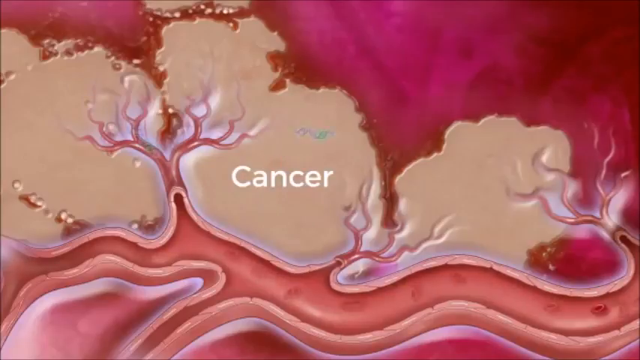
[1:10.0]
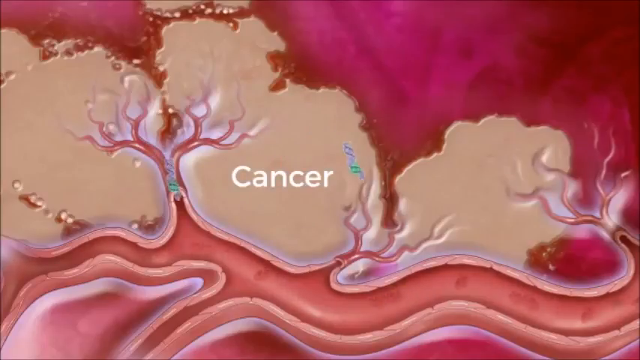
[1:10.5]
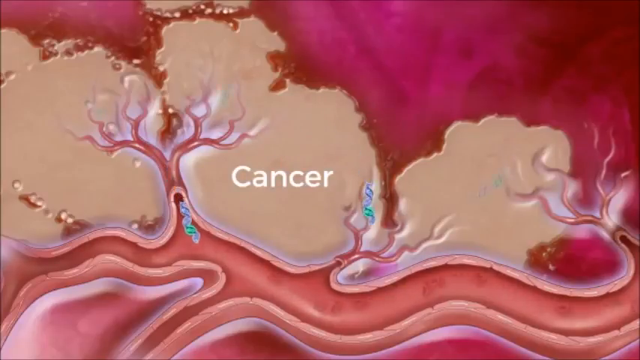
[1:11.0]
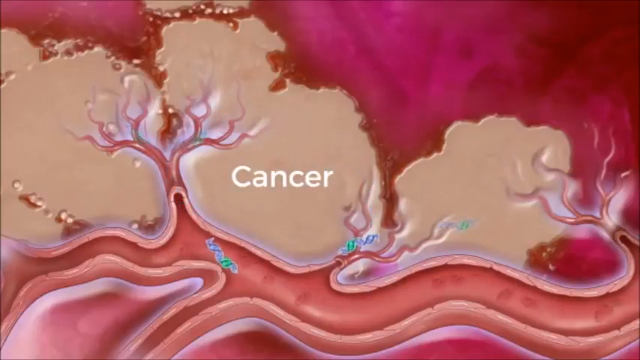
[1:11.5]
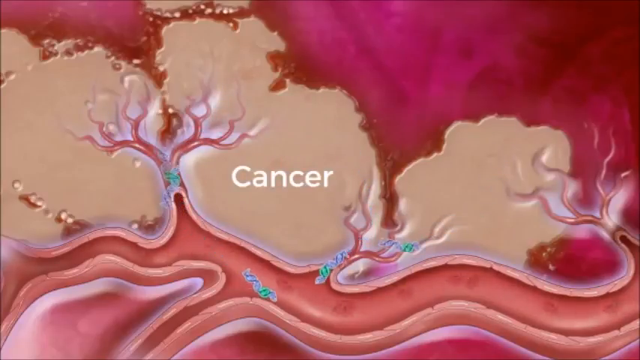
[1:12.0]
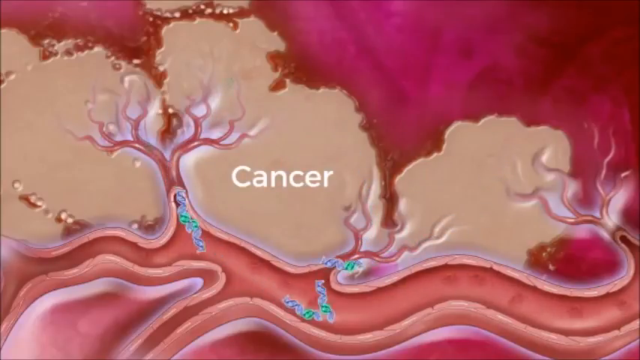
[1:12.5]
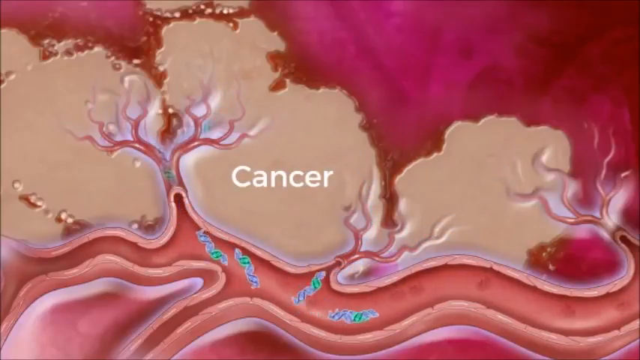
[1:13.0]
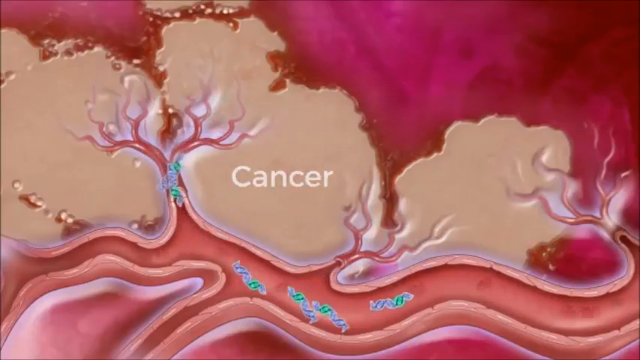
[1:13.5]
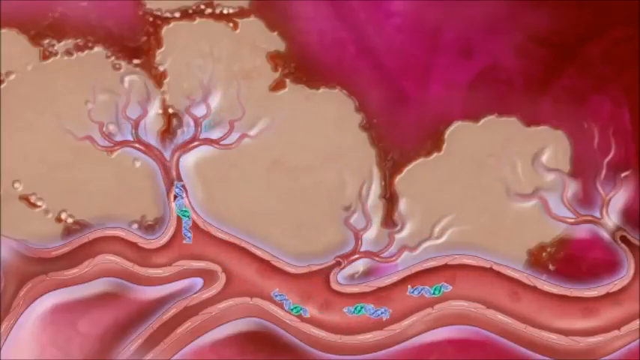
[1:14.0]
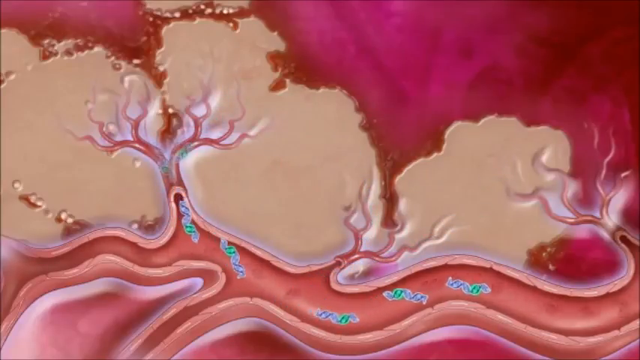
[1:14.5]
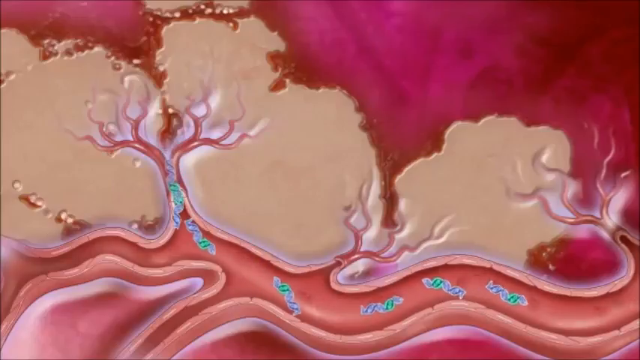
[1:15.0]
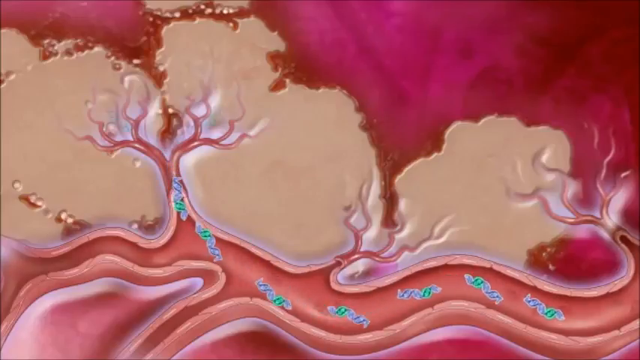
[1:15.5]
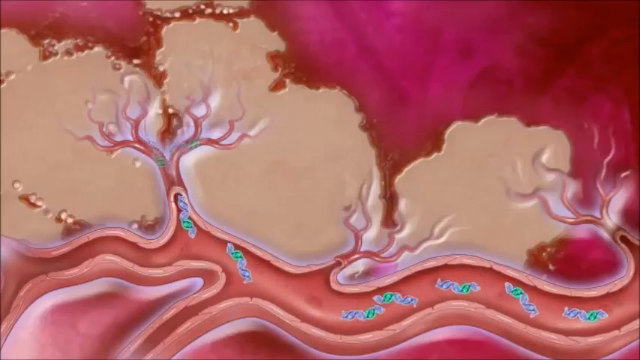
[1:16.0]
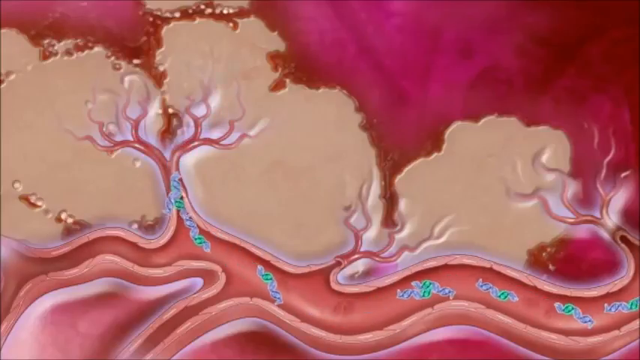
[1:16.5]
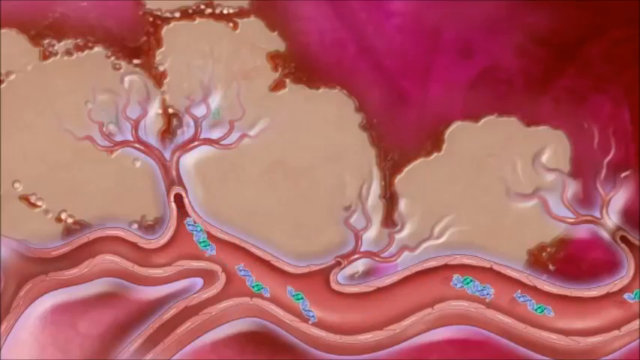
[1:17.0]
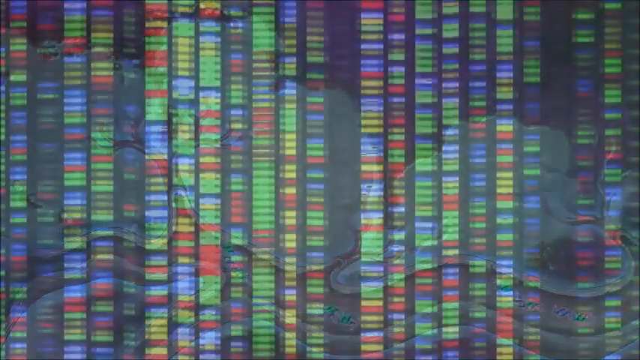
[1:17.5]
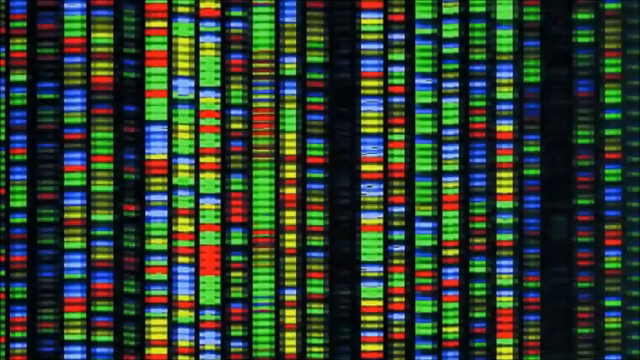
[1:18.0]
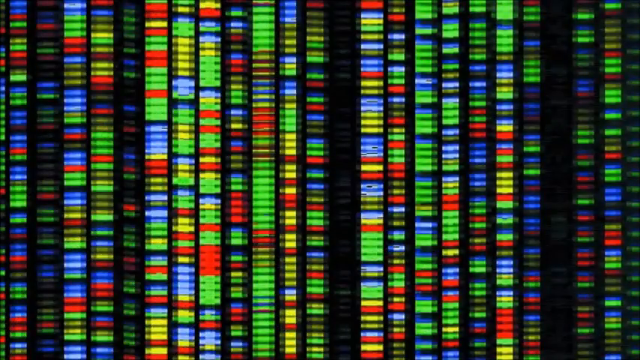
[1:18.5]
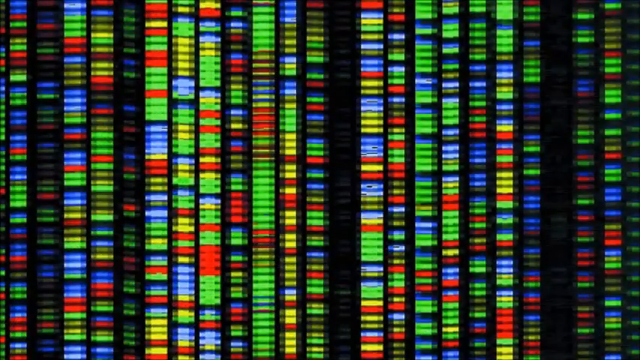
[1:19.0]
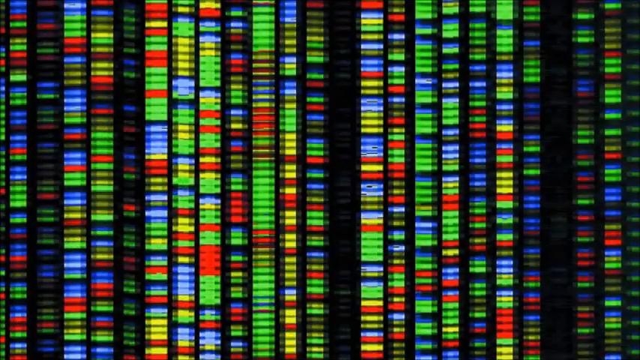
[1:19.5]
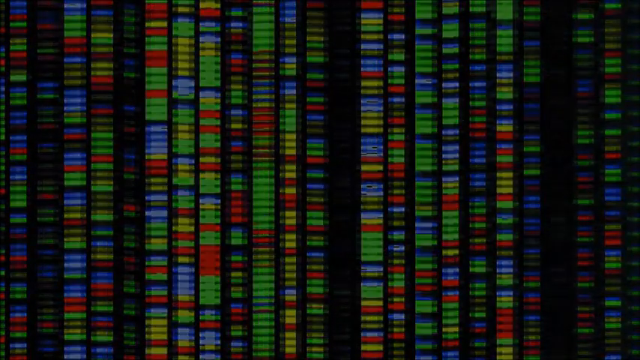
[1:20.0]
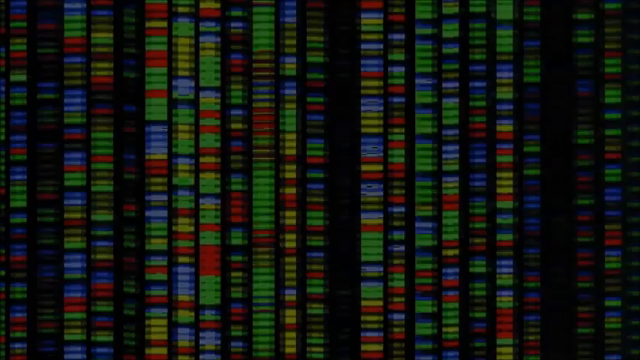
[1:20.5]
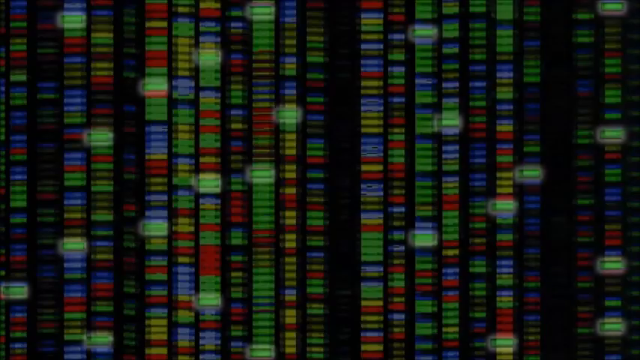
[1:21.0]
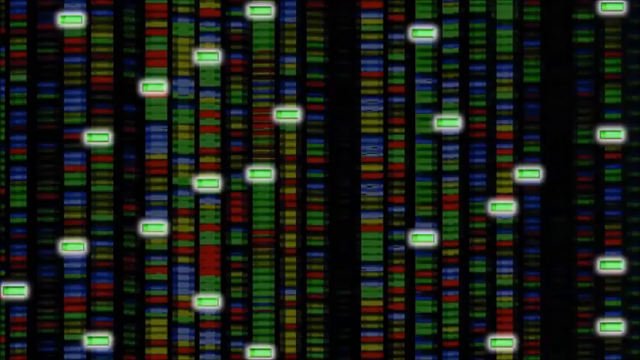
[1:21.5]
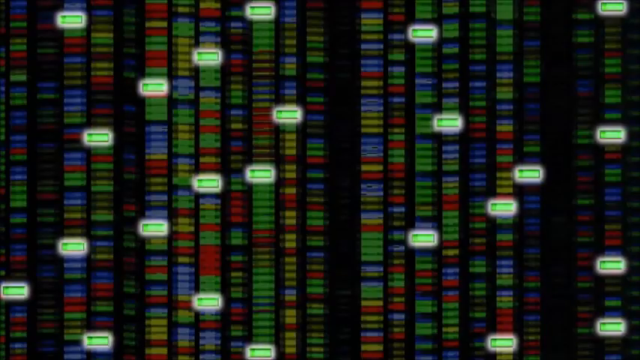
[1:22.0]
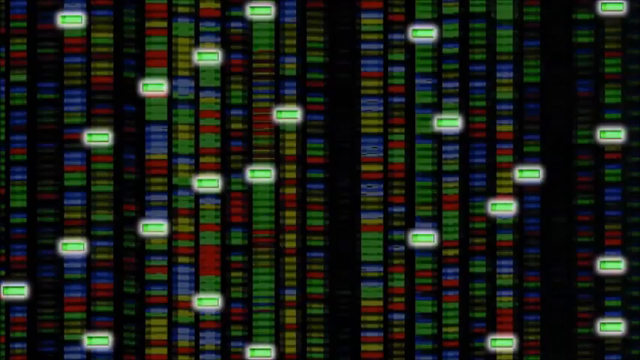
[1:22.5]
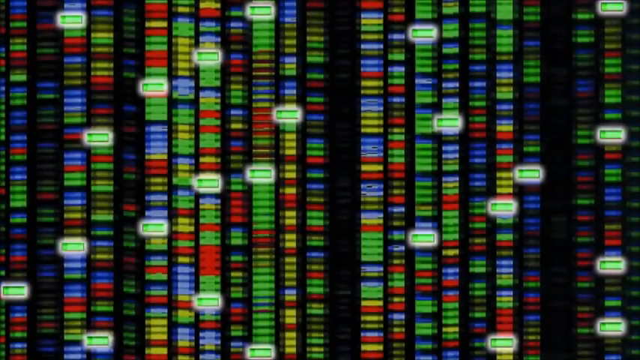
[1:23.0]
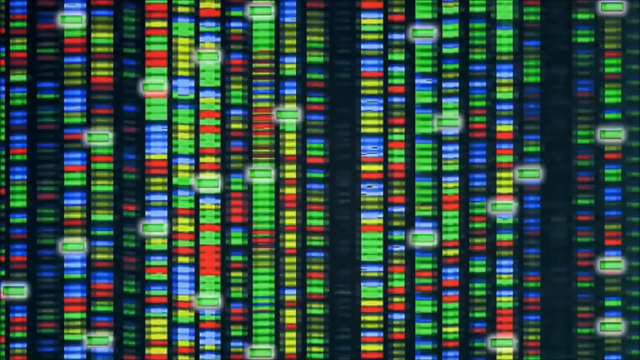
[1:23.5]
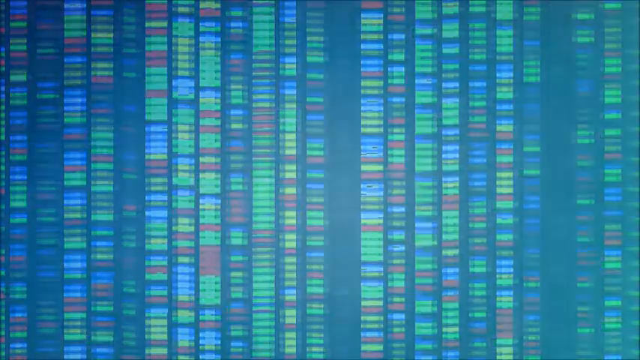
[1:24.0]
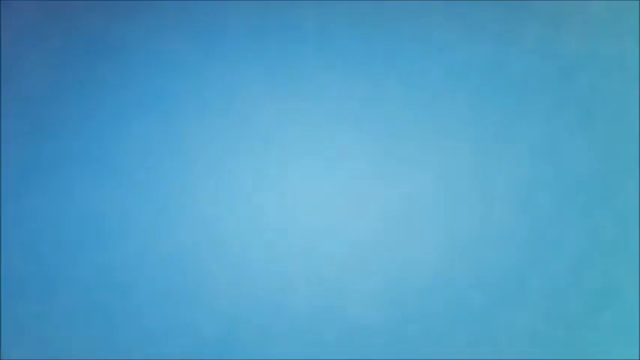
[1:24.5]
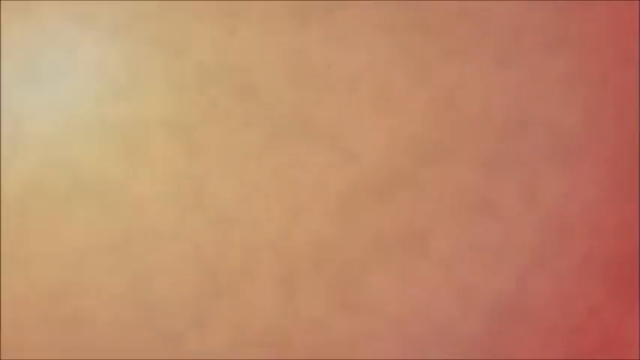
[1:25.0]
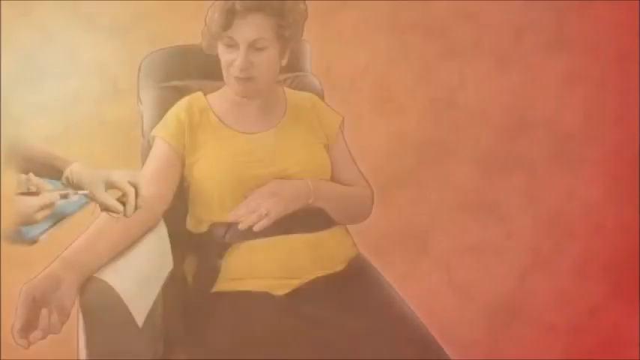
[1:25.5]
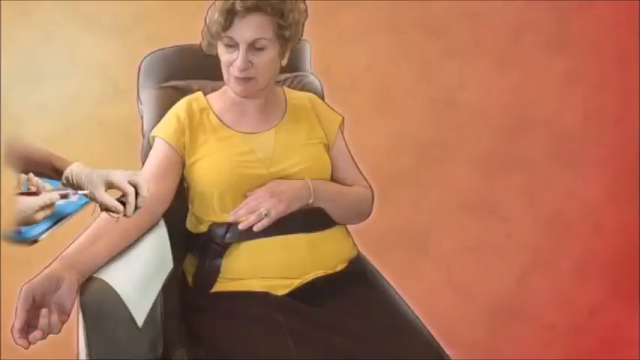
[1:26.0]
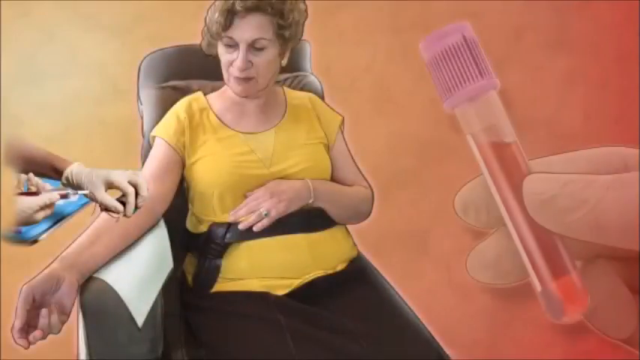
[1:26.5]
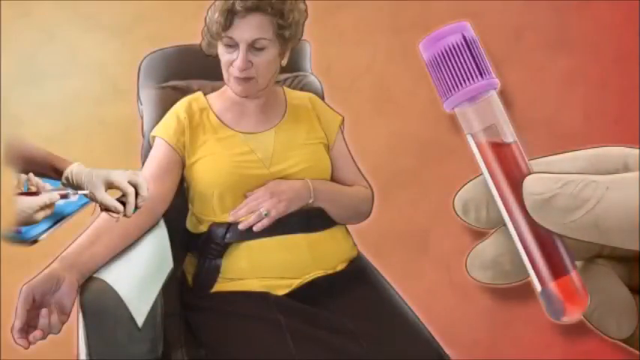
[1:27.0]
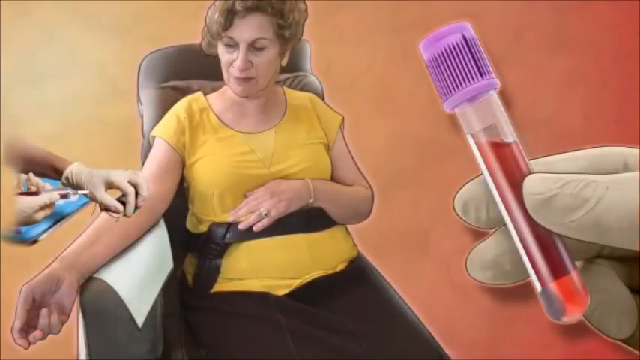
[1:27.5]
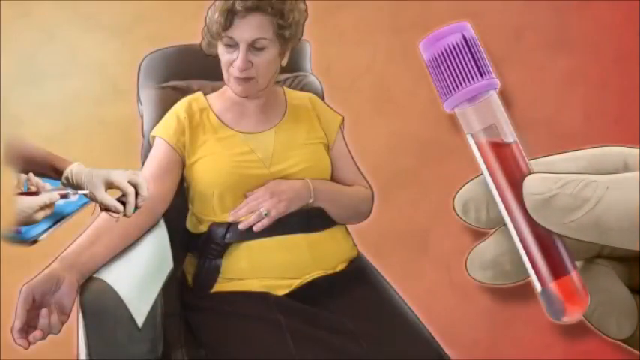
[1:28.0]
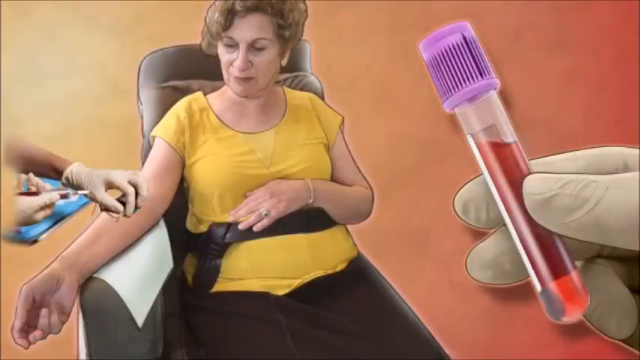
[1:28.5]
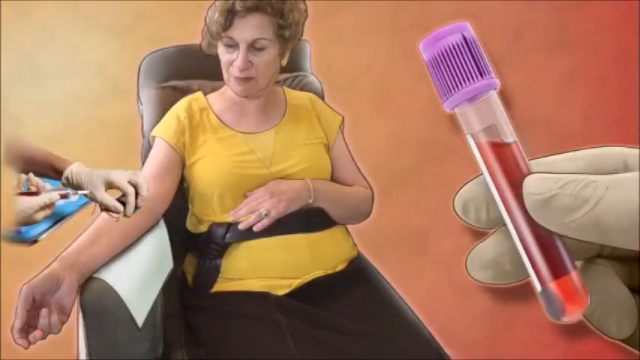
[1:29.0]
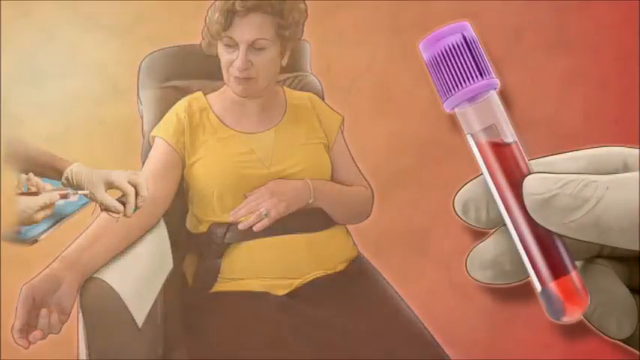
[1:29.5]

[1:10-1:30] A close-up shows a red and tan blotchy system that looks like the inside of cells under a microscope. The tan section toward the left has the word "cancer" written on it in white. Blood and blue cells are running through the bloodstream. The screen then transitions to a screen of sequenced, dashed colored lines; all the lines are vertical and in different colors, as if sequenced scientifically, seemingly representing cancer cells going through the body and being sequenced. Some green markers scattered sporadically across the screen light up brighter while the rest of the screen darkens. The screen then transitions to the grandmother from the photo sitting in a chair on the left side. Her right hand is across her stomach and her left hand is stretched out, palm side up, and a gloved hand comes in from the right side of the image directly onto the curve of her arm; it looks like she is getting an injection. On the right side of the screen is a very close-up image of a white rubber-gloved hand holding a vial of blood with a purple cap, tilted toward the woman in the chair, a dramatically large close-up.